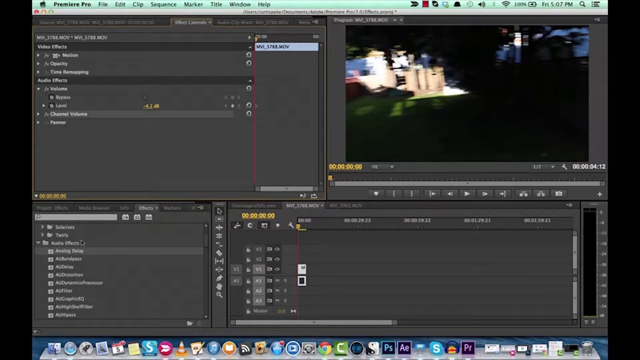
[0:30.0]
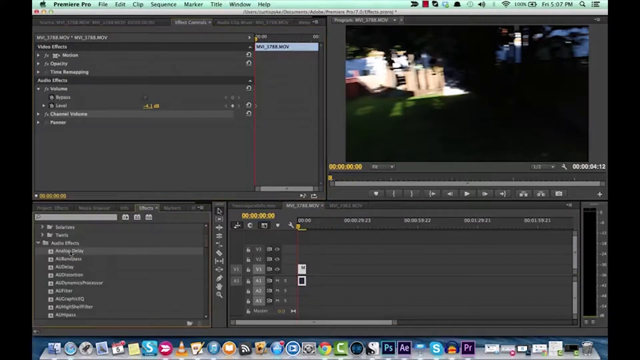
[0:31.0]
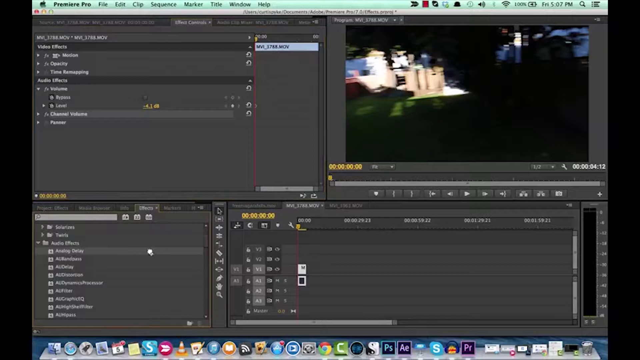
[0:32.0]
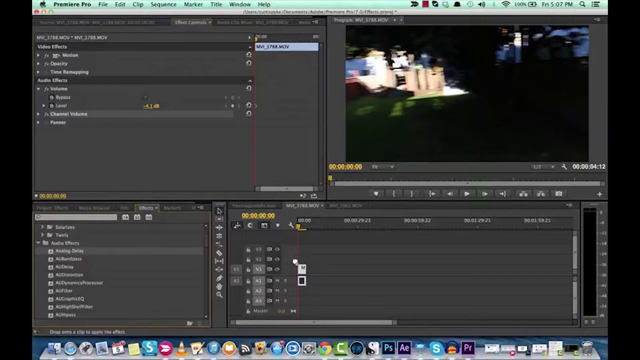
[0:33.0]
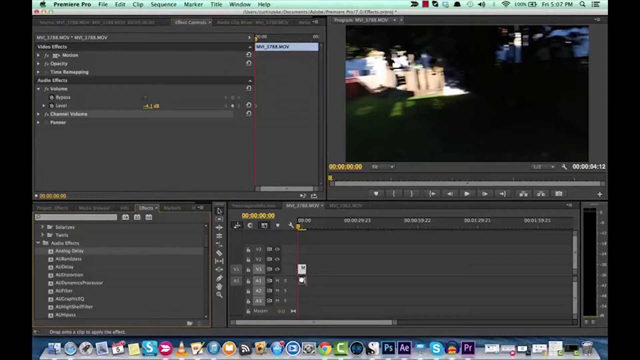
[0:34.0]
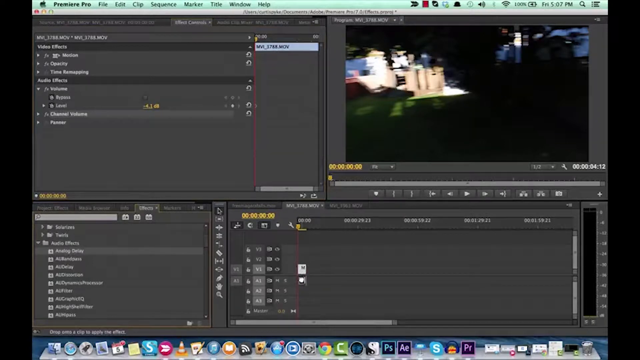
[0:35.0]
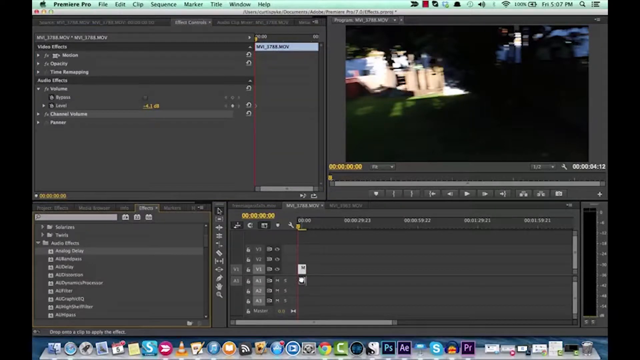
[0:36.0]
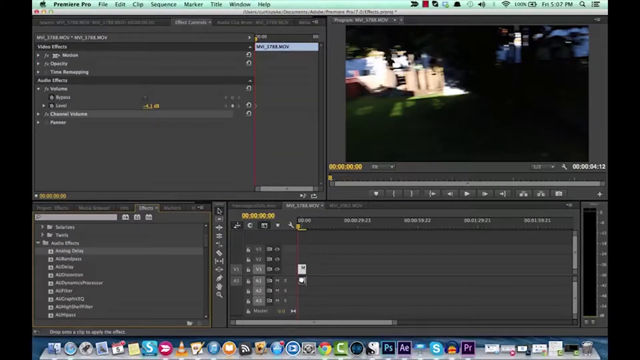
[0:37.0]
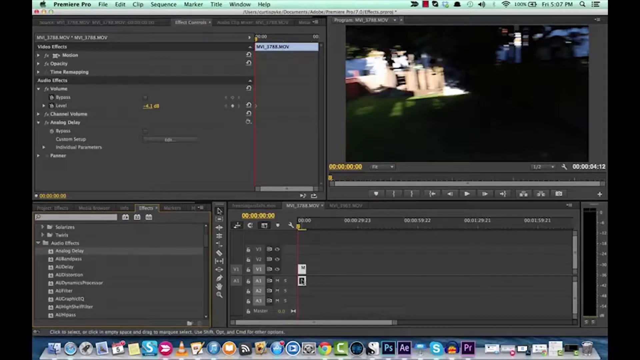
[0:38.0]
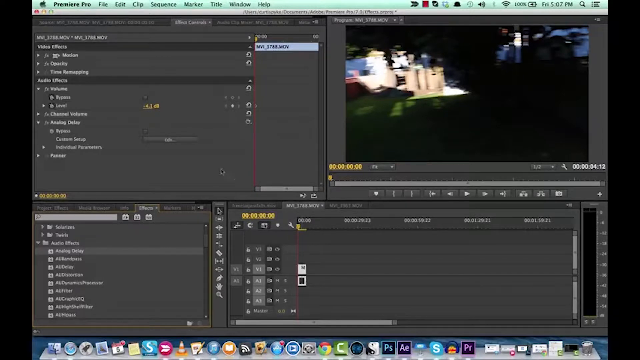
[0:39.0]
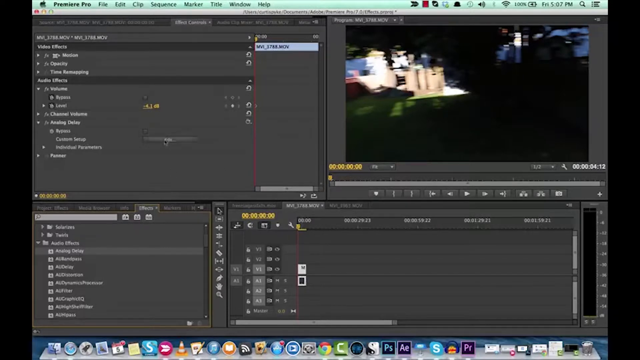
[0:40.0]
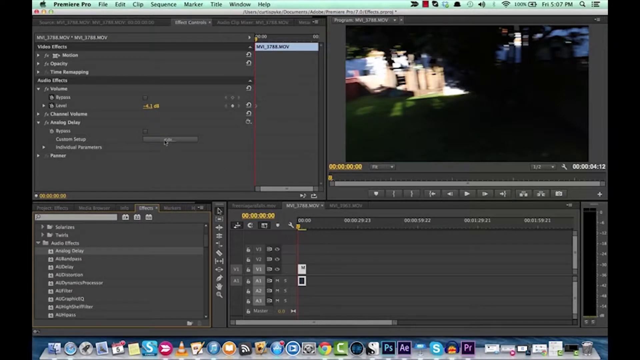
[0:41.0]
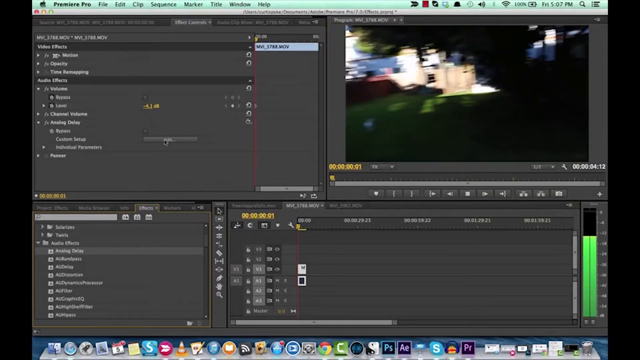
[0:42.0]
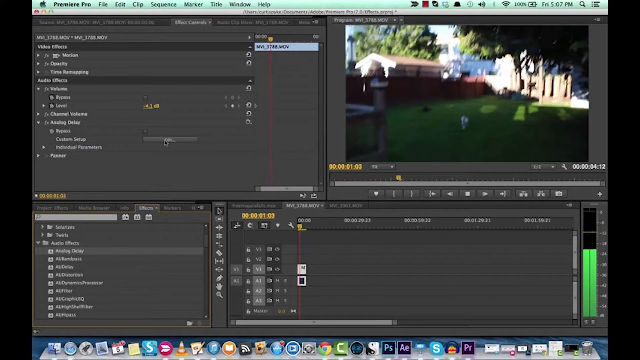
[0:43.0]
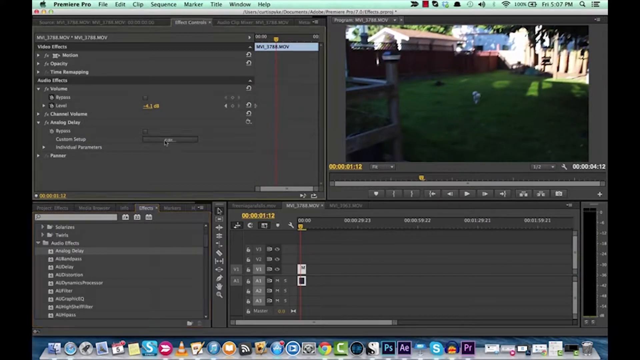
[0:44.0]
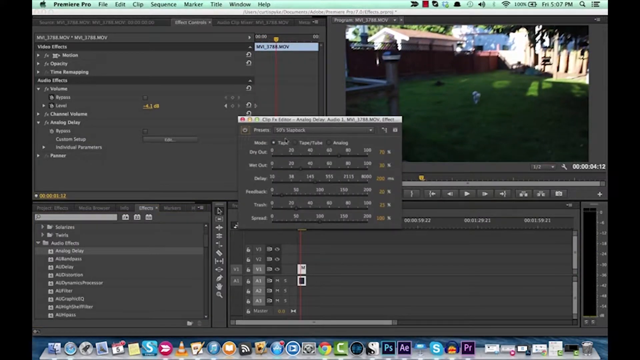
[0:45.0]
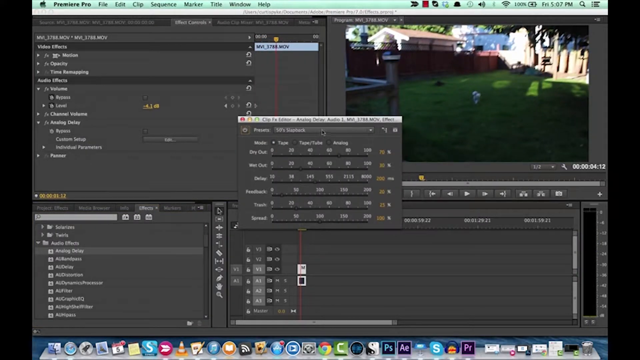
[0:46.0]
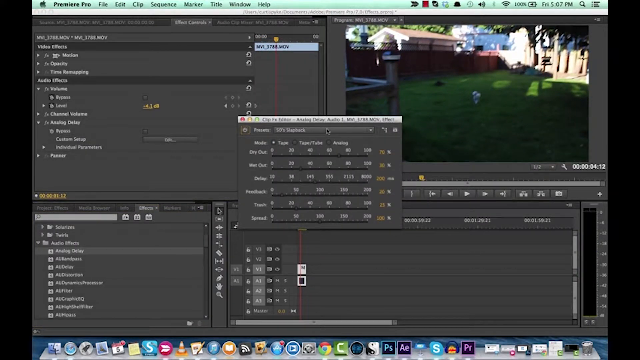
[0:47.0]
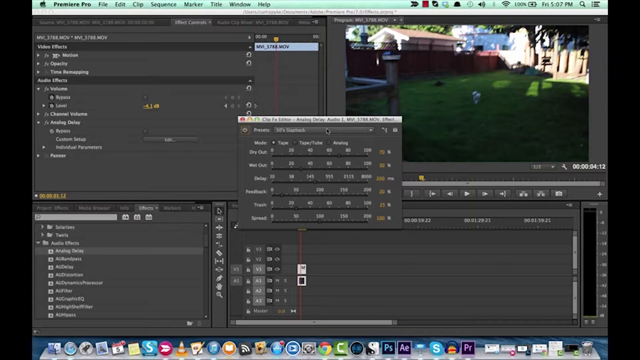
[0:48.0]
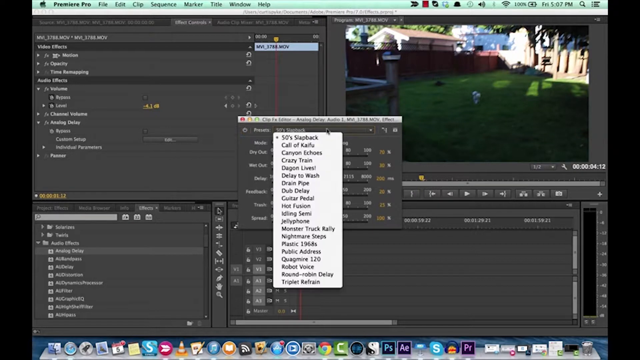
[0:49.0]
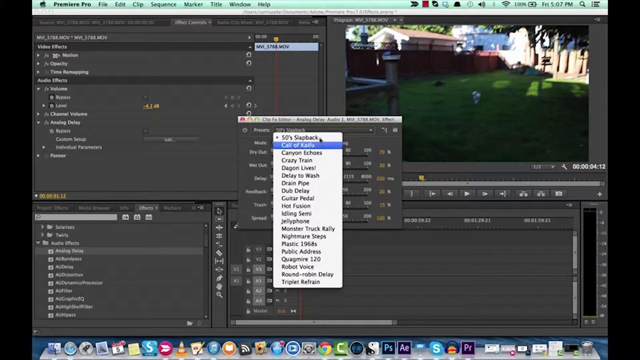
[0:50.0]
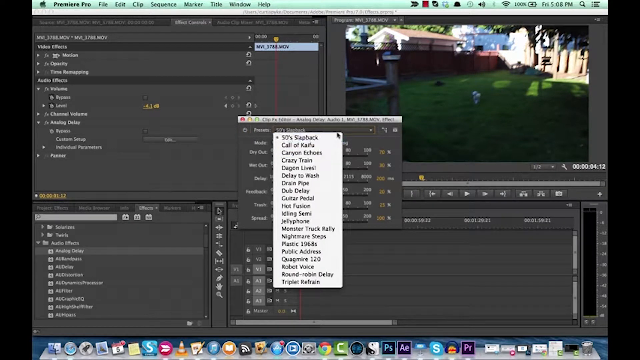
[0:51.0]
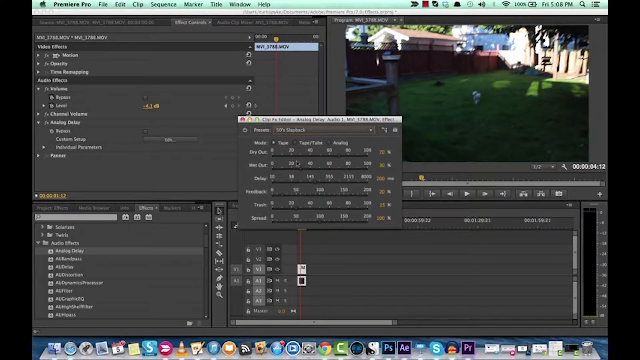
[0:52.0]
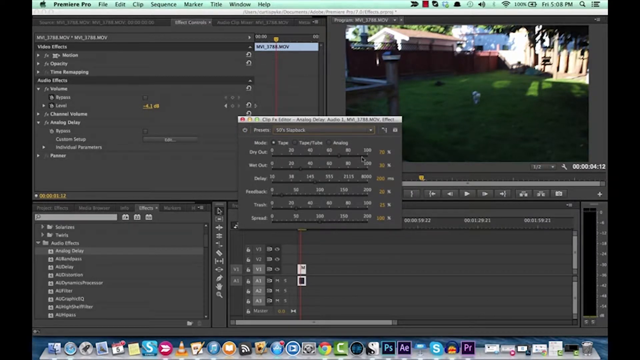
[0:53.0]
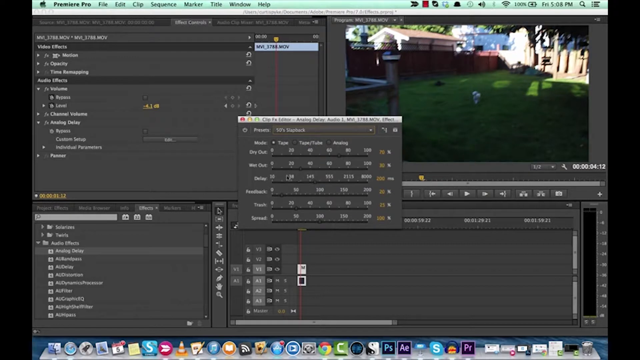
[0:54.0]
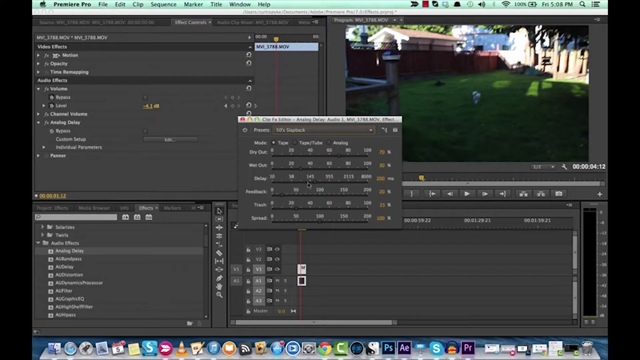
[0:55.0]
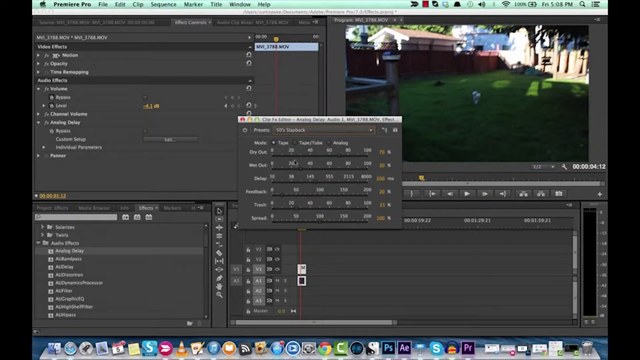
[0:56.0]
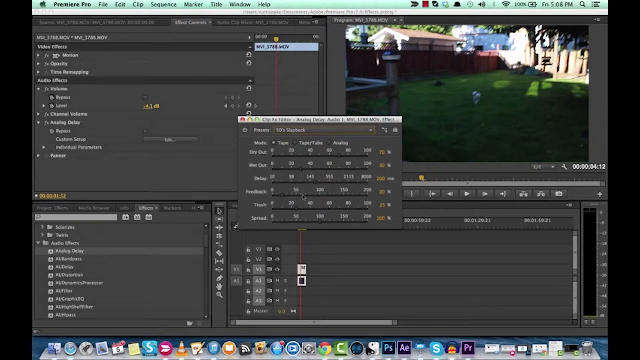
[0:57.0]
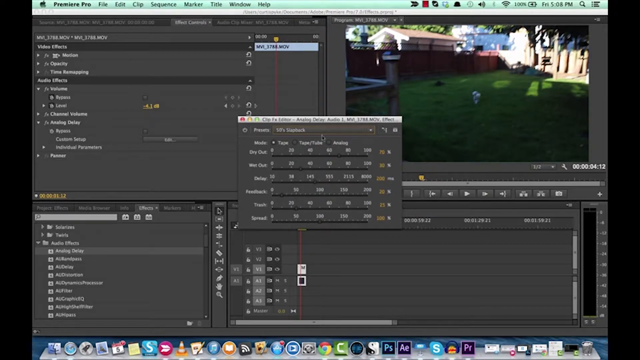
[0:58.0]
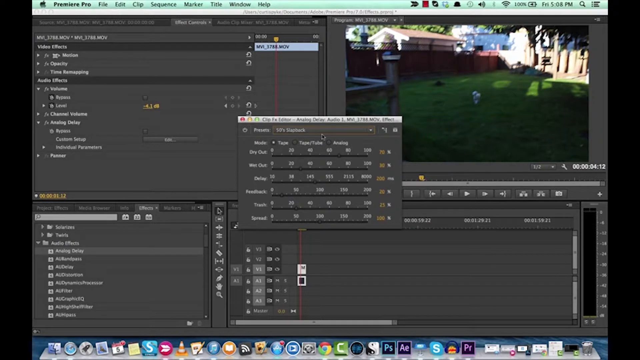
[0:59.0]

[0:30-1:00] The user goes over the timeline effects, moves to the center of the screen and clicks on a location, apparently on a different layer of the video, seemingly adjusting or adding some sort of marker. They open an effect called Analog Decay and change its settings, moving up and down through them with the mouse starting from the top. The options are represented by sliders or a configuration menu. When they first open the presets, the "fifties slap back" preset is selected; they seem to examine each option and click back to the preset menu. They then go back up to the top of the page and revert to nothing. The program's interface and the box are in a gray color scheme.